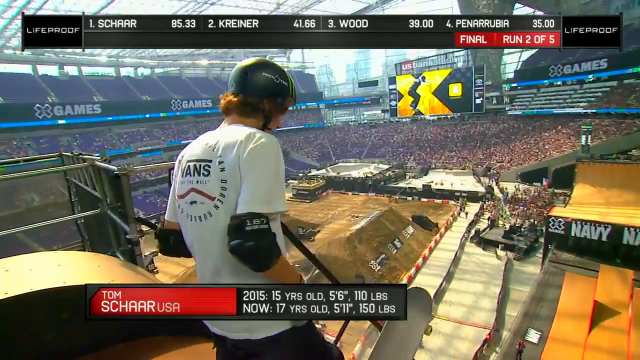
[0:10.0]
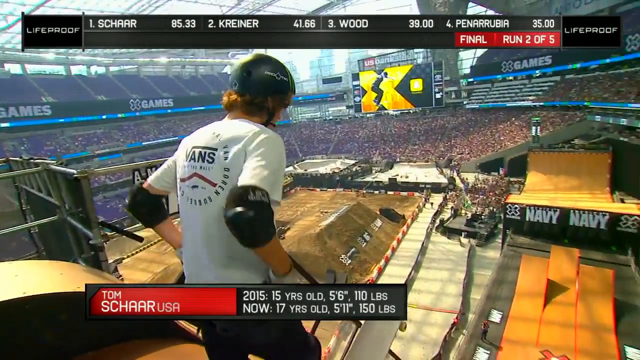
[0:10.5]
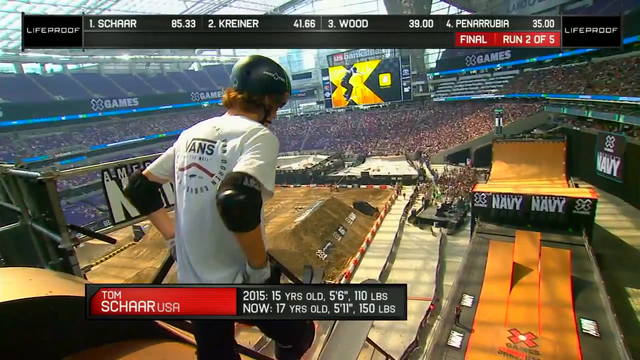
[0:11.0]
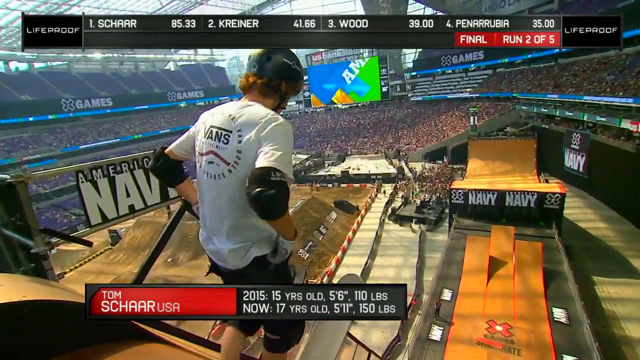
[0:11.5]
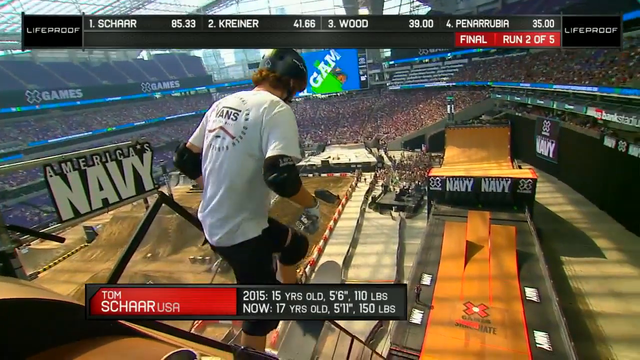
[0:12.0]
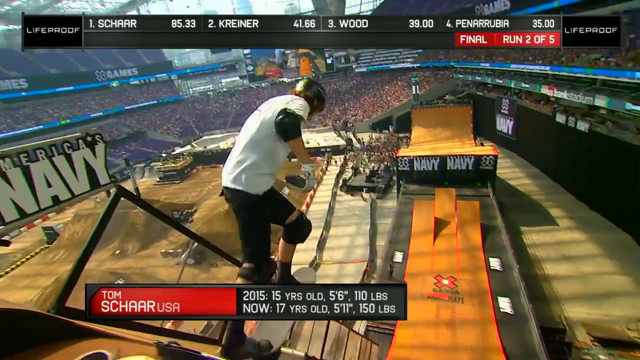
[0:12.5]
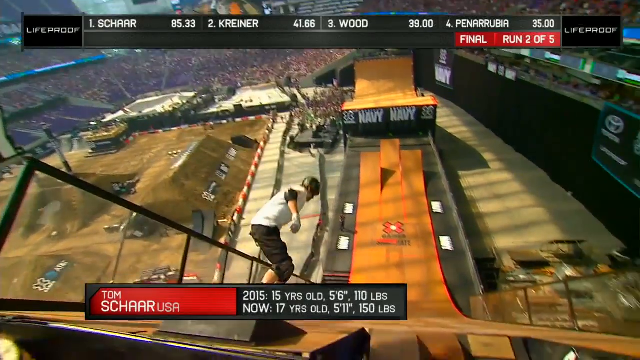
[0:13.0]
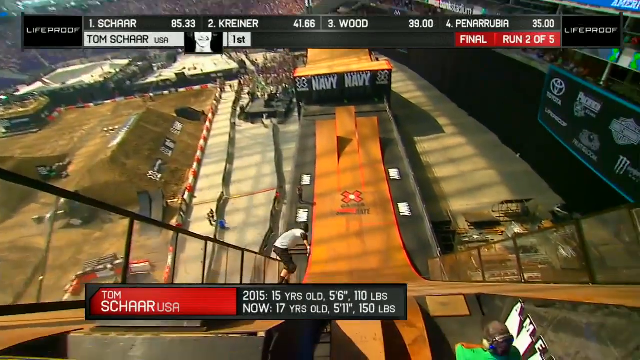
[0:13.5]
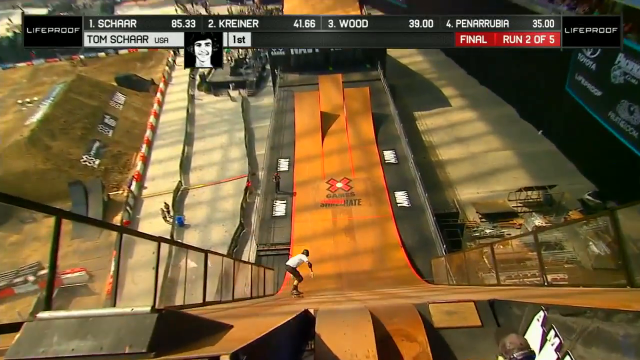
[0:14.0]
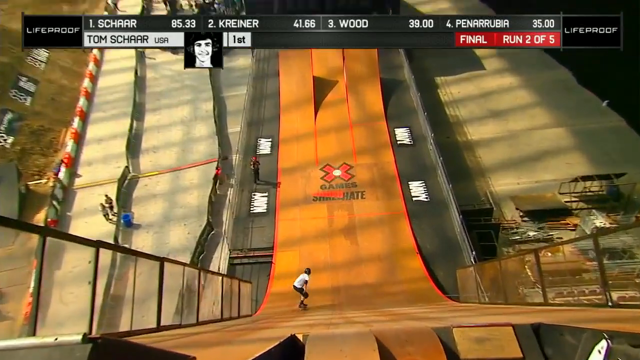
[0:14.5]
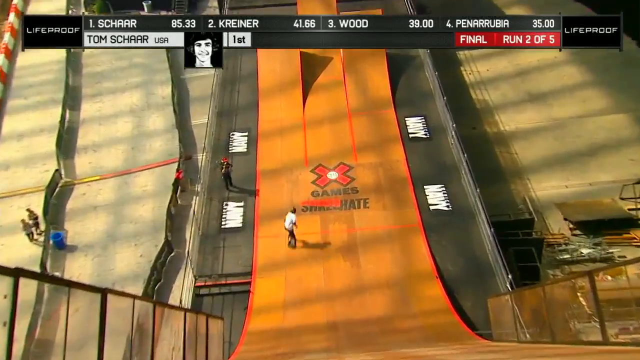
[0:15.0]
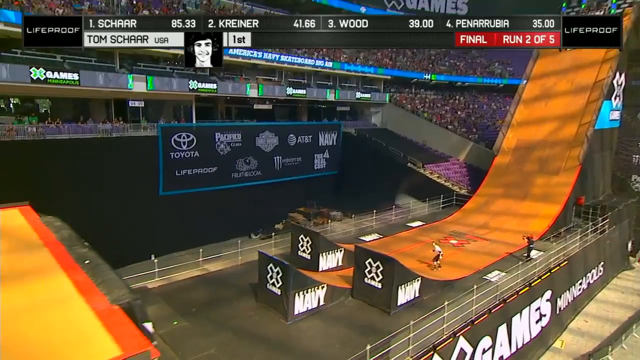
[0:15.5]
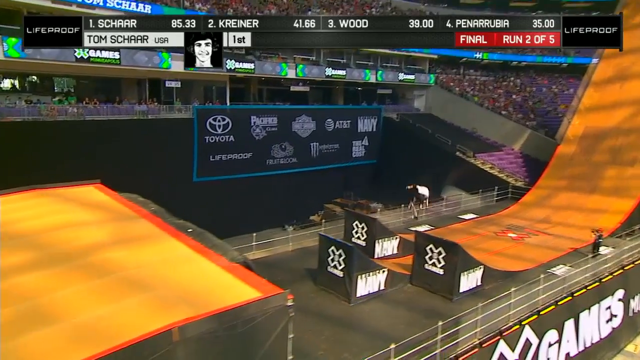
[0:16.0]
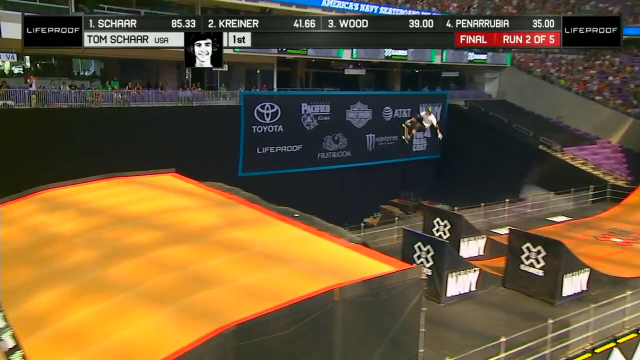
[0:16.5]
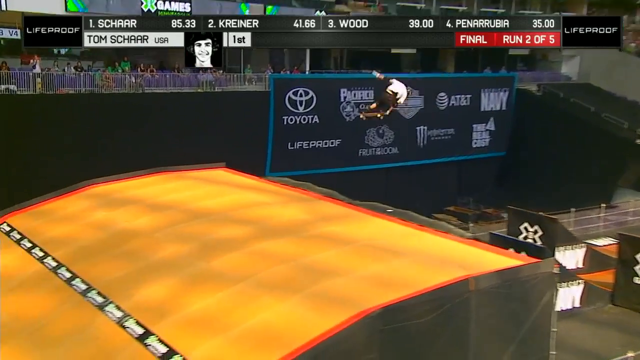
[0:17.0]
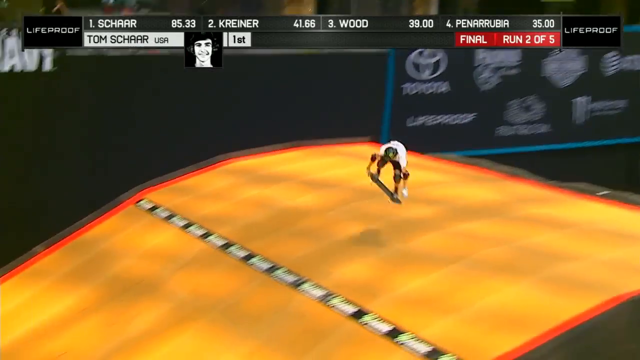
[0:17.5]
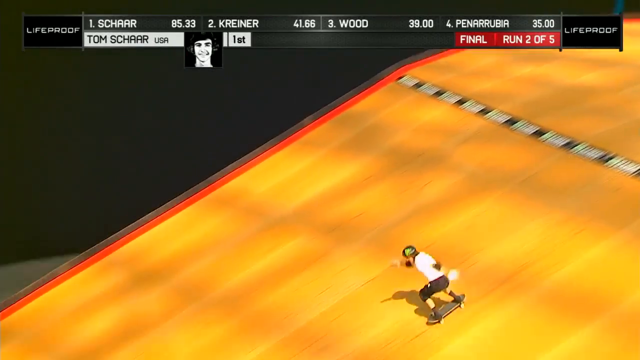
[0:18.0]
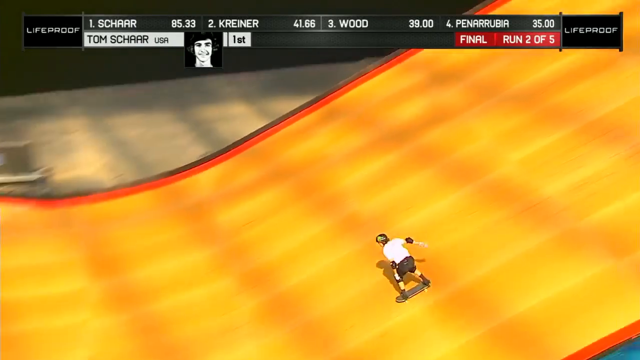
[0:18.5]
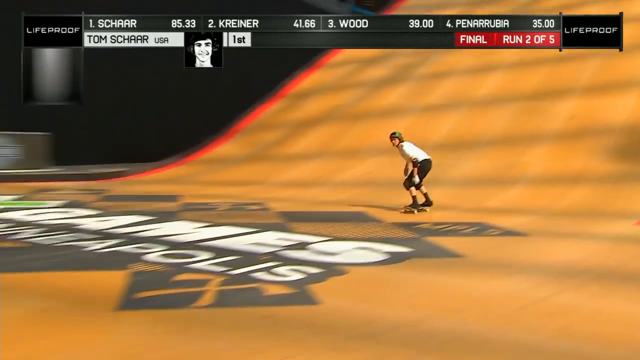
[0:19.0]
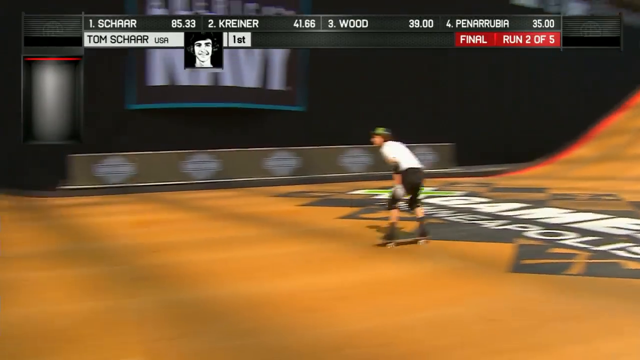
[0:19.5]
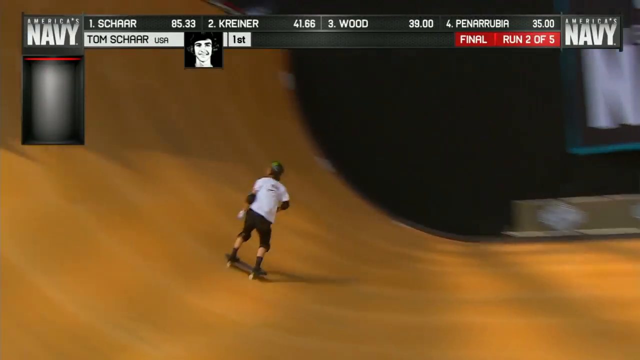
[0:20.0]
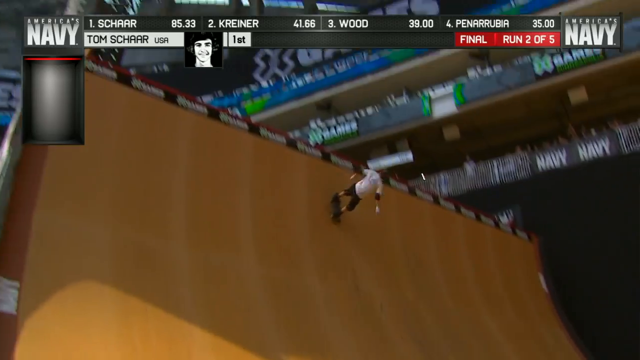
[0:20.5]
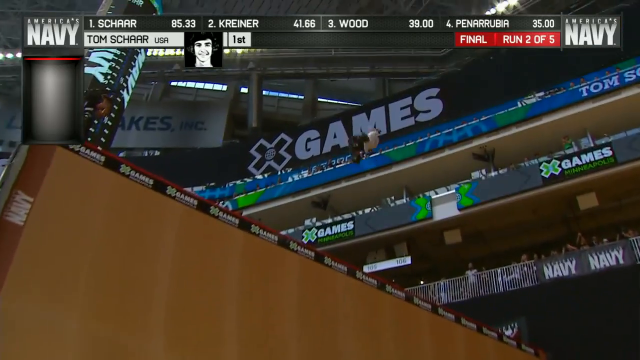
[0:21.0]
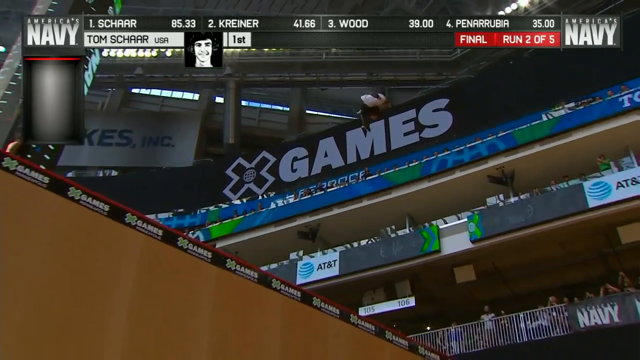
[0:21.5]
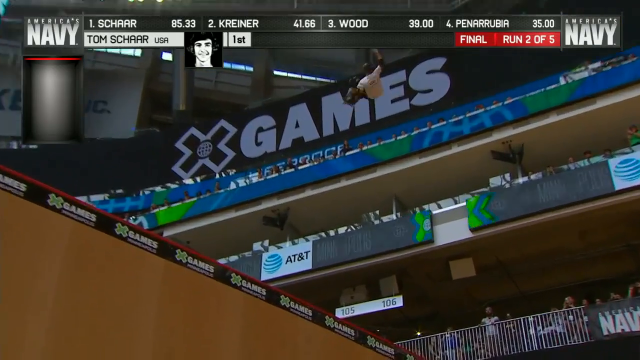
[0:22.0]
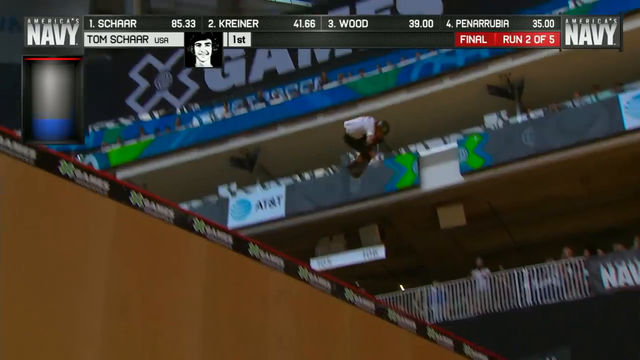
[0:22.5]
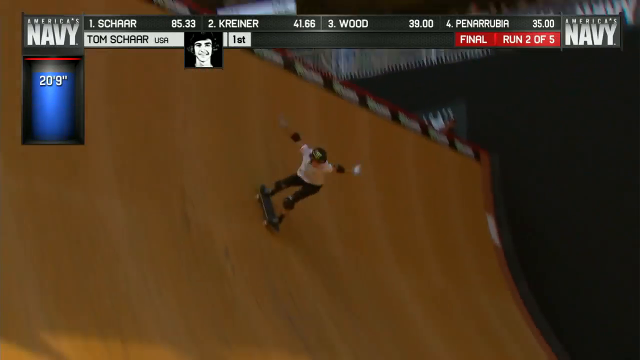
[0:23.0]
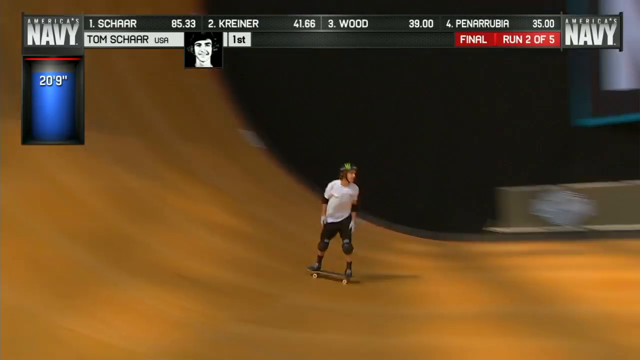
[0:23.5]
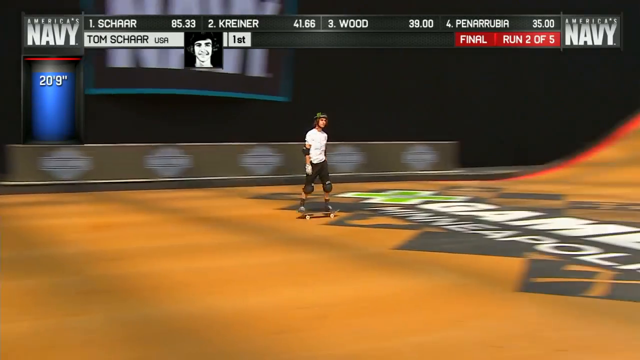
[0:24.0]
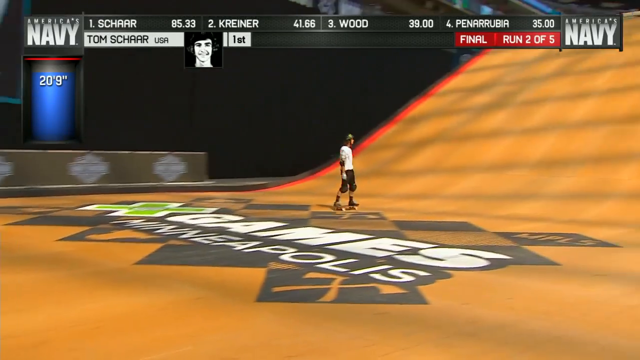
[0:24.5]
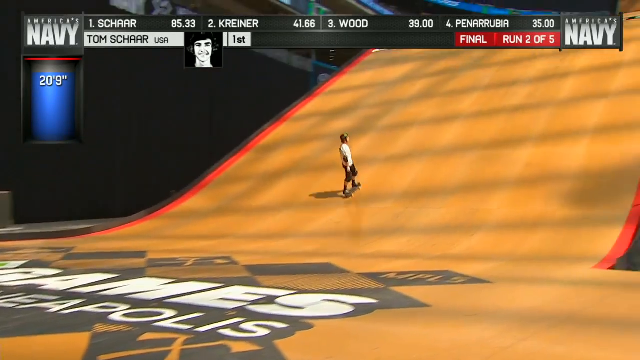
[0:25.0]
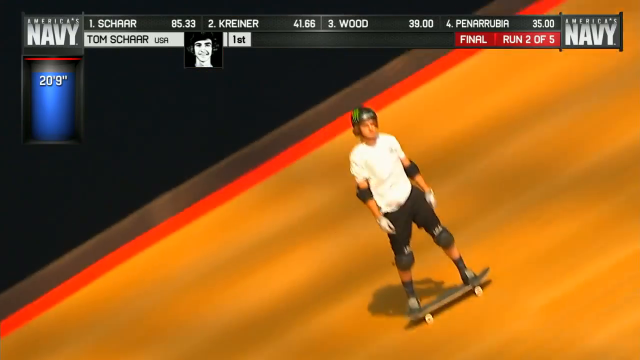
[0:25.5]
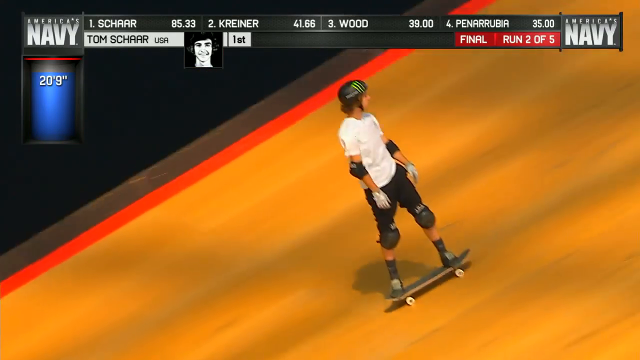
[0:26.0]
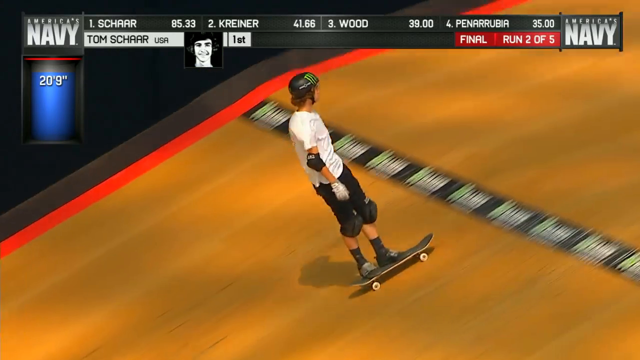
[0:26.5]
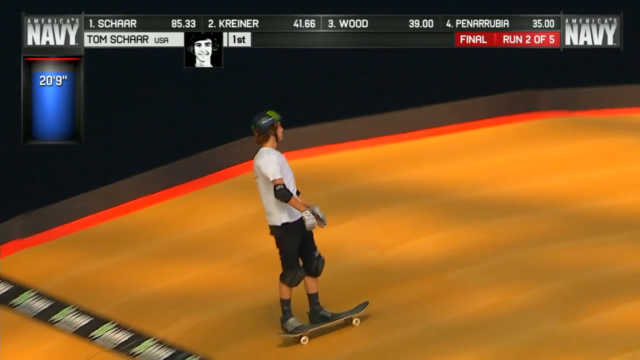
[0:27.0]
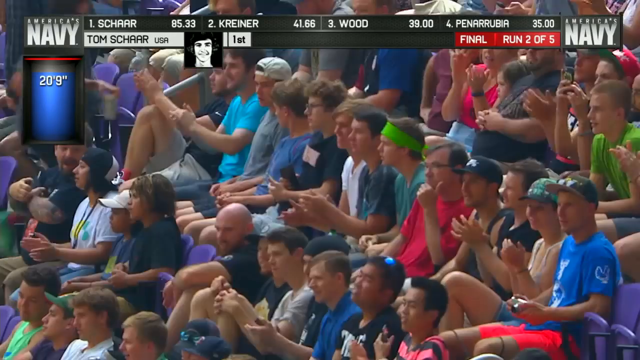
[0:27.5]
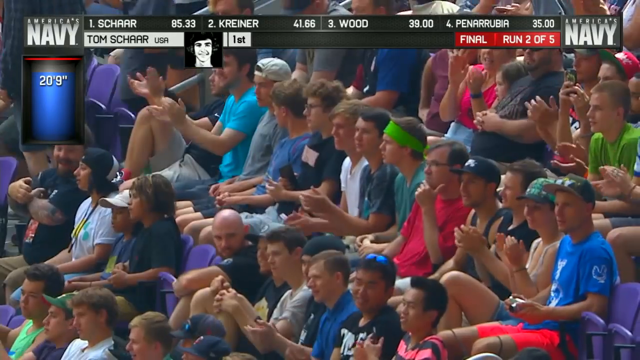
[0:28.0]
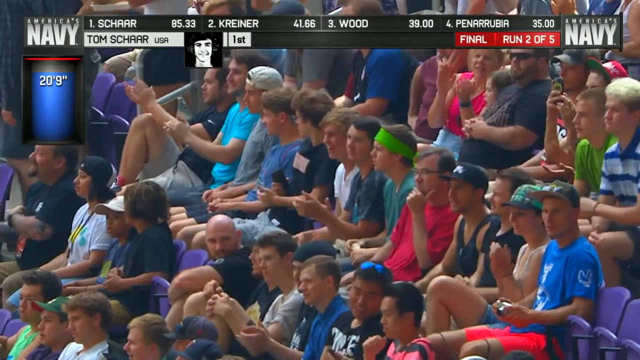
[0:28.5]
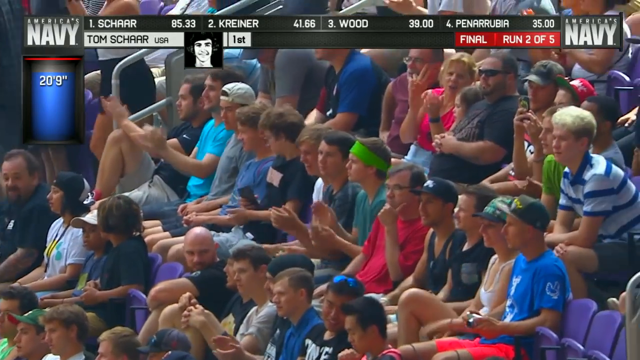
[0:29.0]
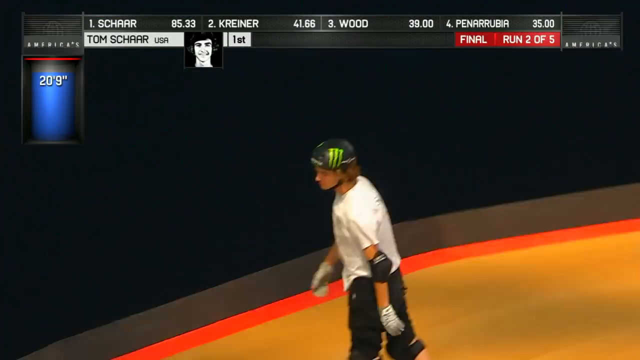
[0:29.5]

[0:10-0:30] Tom Schaar stands at the edge of the halfpipe, which looks to be about two stories tall and is at least as tall as the second stadium deck. A black sign for the X Games is in the background. Across the top of the screen is what looks like scores or times, with four names listed: Schaar, Kreiner, Wood and Penarubia, probably the top four competitors. Tom wears a white Vans t-shirt, black knee-length skateboarder shorts, black elbow pads and a black helmet, with red curly hair poking out from under the helmet. He drops into the halfpipe, which is made of a light-colored wood, going far down, then goes over an extreme jump to land on the second half of the halfpipe. He crouches, goes up the other side, spins what looks to be about four times, and lands back at the bottom. Fans sitting in blue stadium chairs clap in the background. The stadium looks fairly empty for a large event.